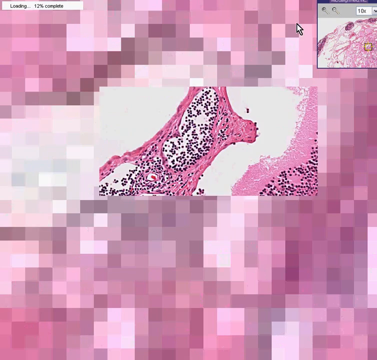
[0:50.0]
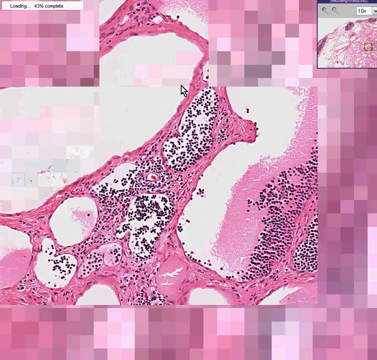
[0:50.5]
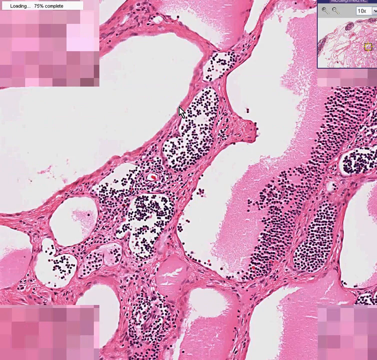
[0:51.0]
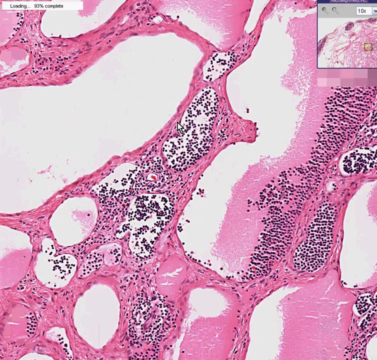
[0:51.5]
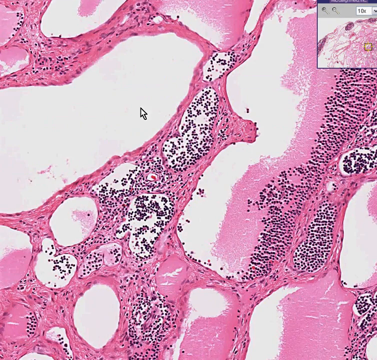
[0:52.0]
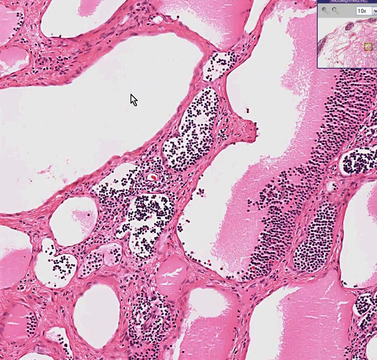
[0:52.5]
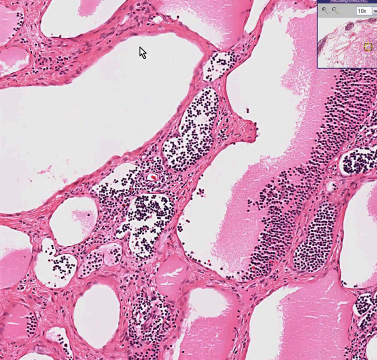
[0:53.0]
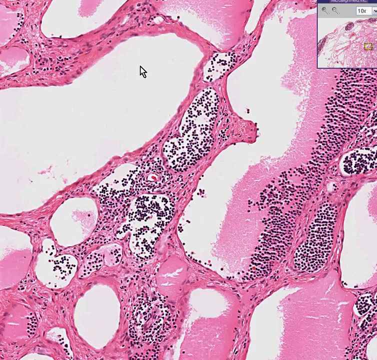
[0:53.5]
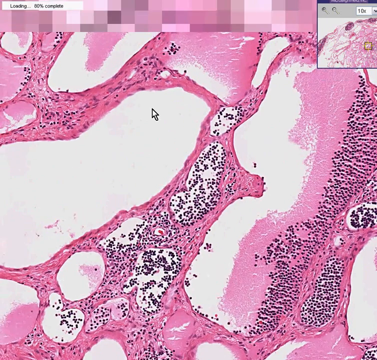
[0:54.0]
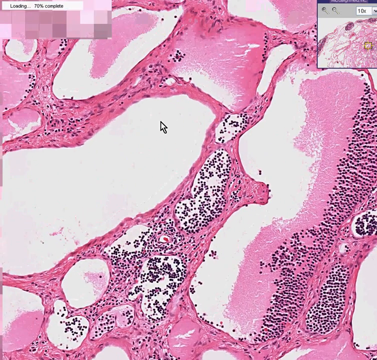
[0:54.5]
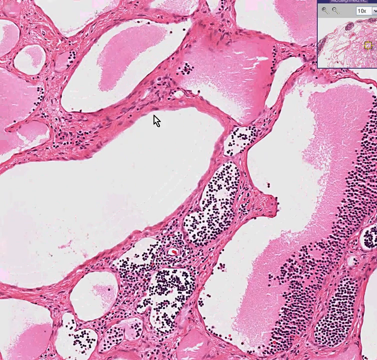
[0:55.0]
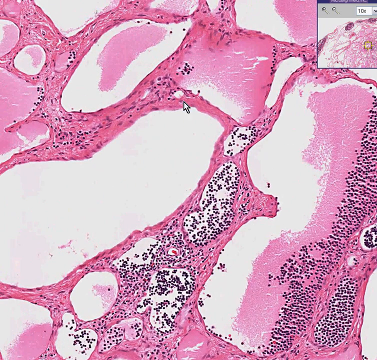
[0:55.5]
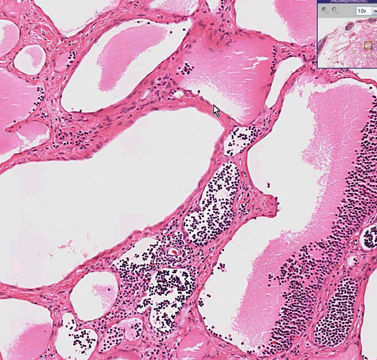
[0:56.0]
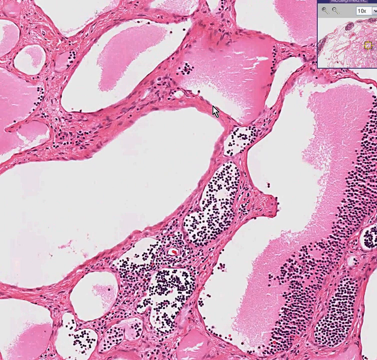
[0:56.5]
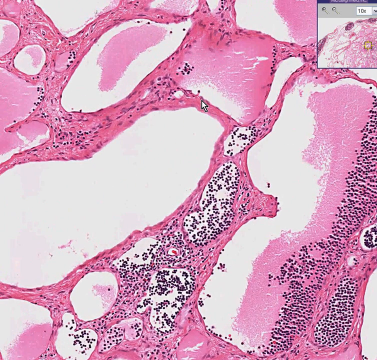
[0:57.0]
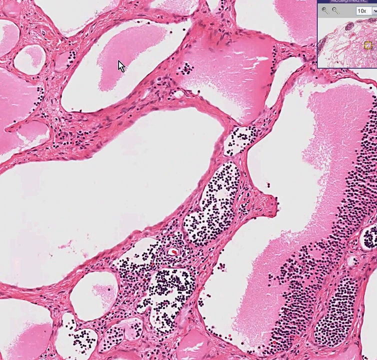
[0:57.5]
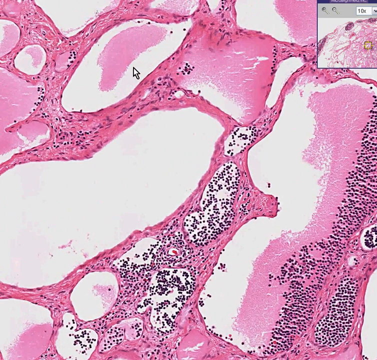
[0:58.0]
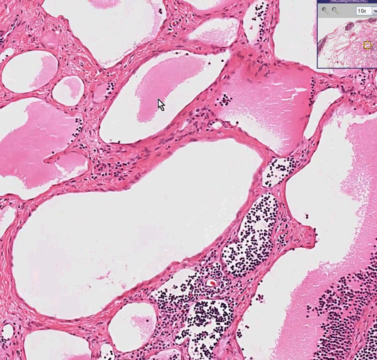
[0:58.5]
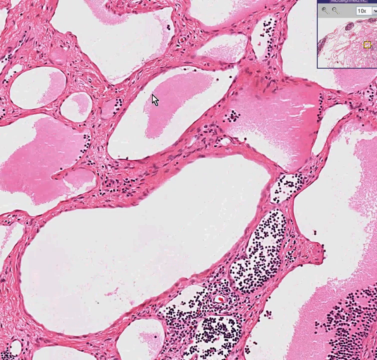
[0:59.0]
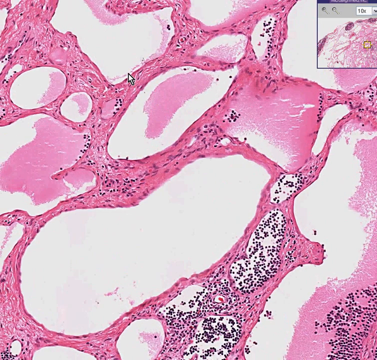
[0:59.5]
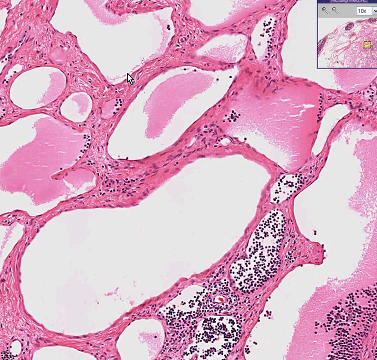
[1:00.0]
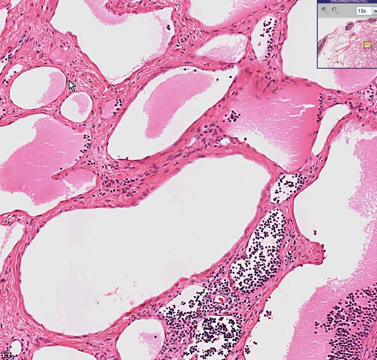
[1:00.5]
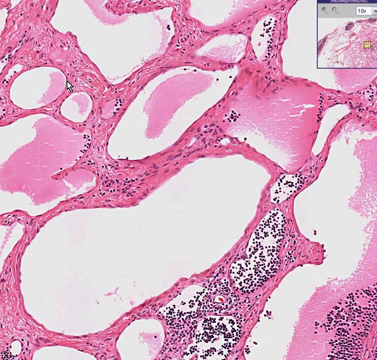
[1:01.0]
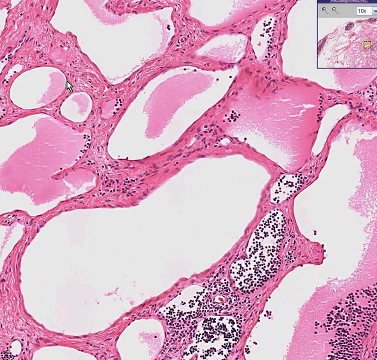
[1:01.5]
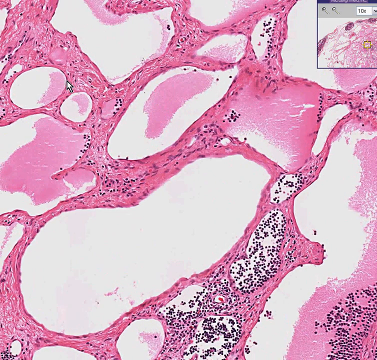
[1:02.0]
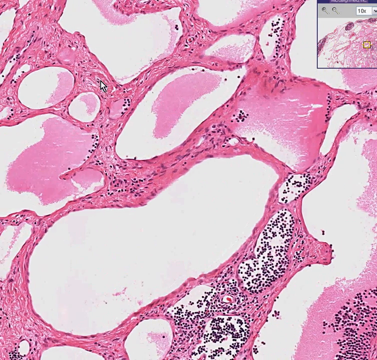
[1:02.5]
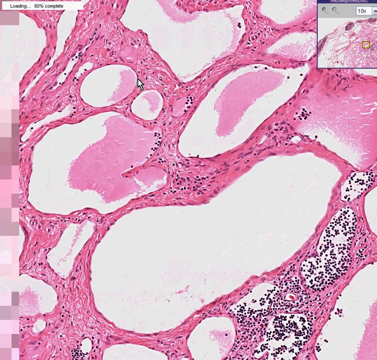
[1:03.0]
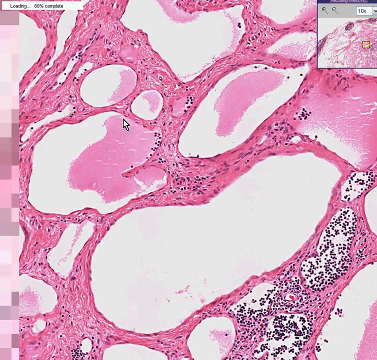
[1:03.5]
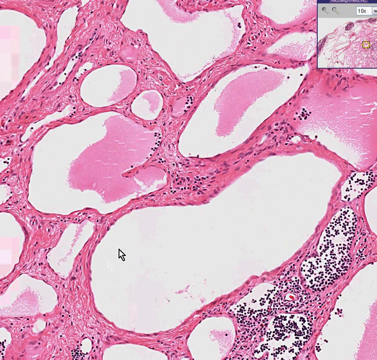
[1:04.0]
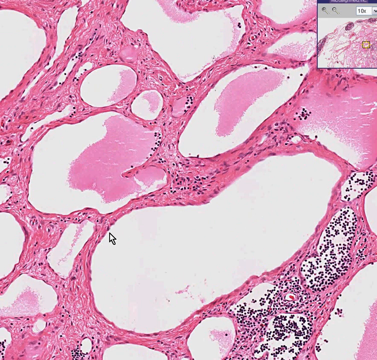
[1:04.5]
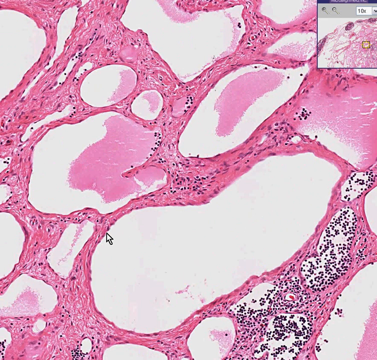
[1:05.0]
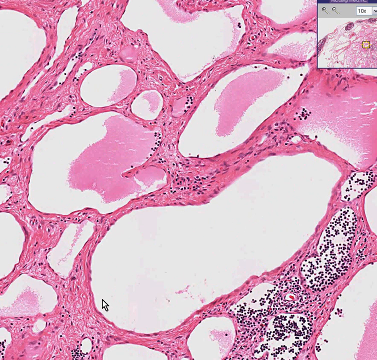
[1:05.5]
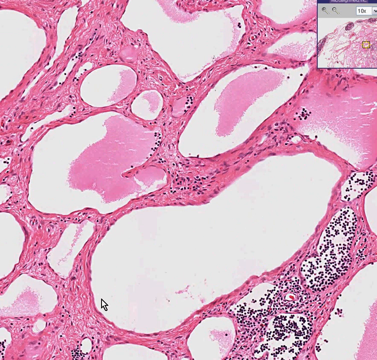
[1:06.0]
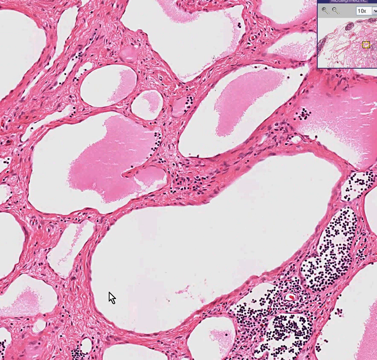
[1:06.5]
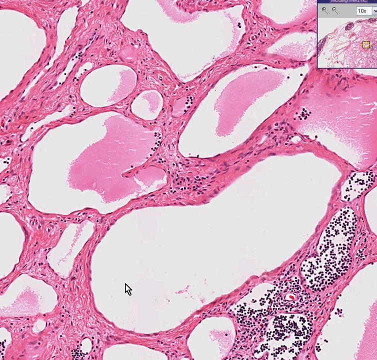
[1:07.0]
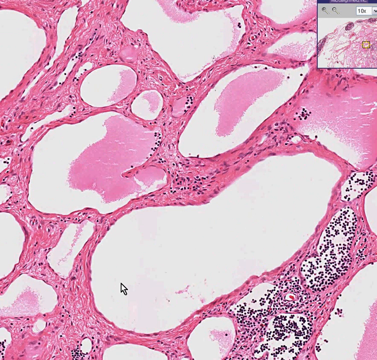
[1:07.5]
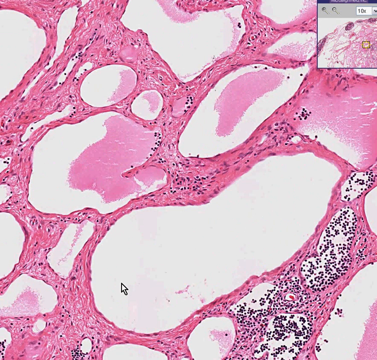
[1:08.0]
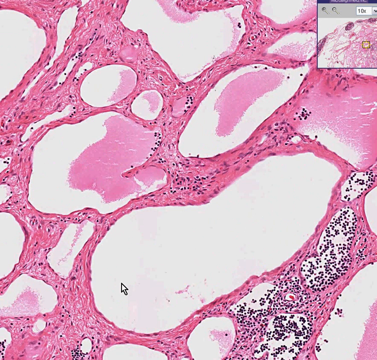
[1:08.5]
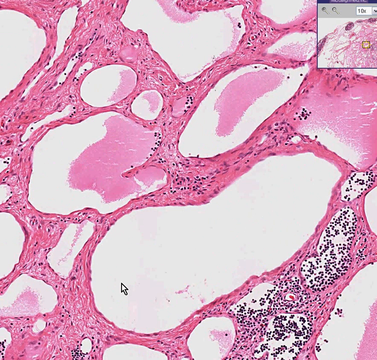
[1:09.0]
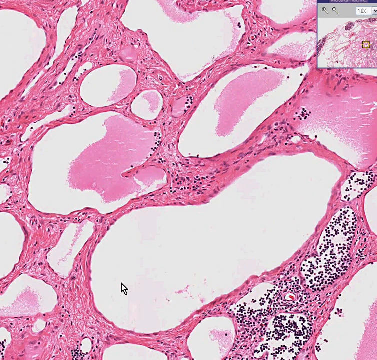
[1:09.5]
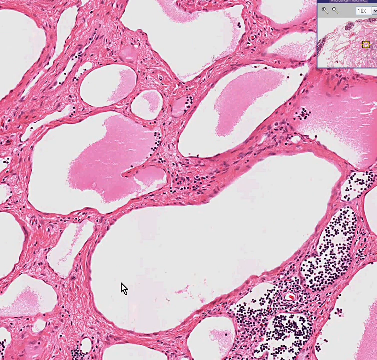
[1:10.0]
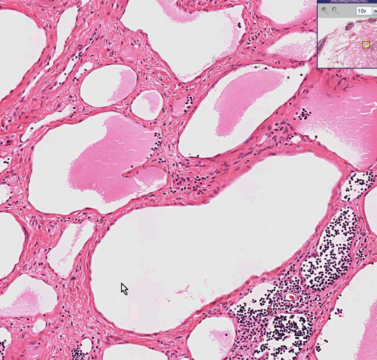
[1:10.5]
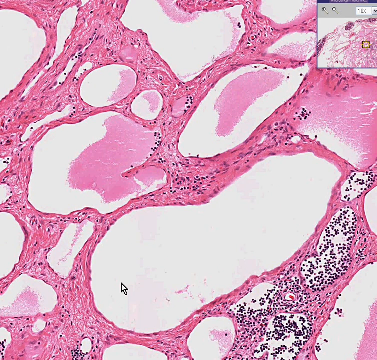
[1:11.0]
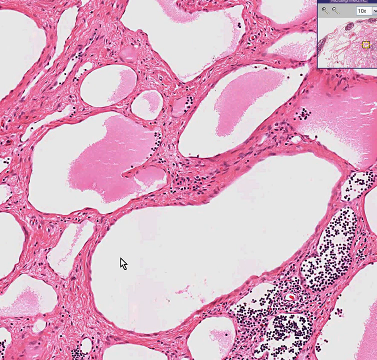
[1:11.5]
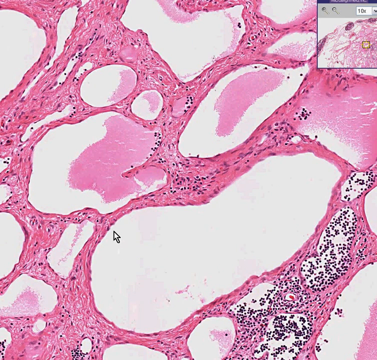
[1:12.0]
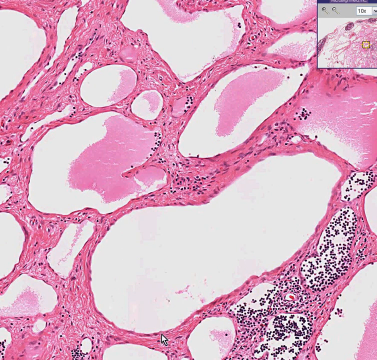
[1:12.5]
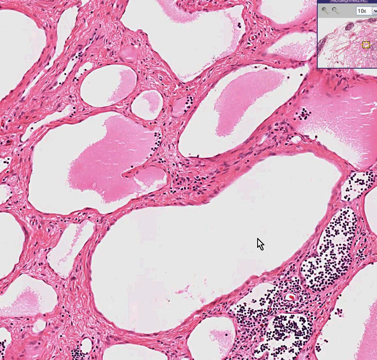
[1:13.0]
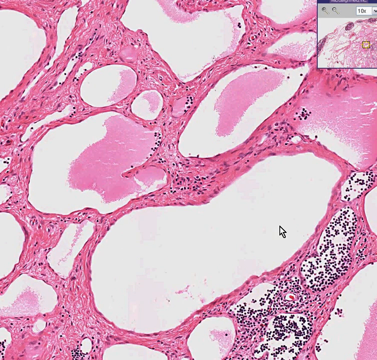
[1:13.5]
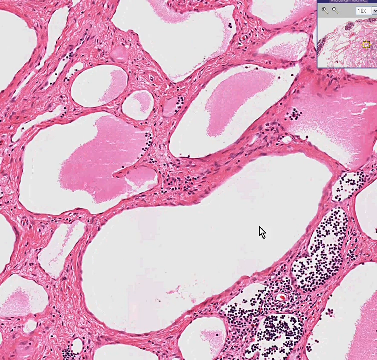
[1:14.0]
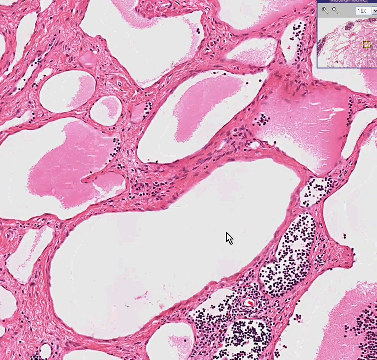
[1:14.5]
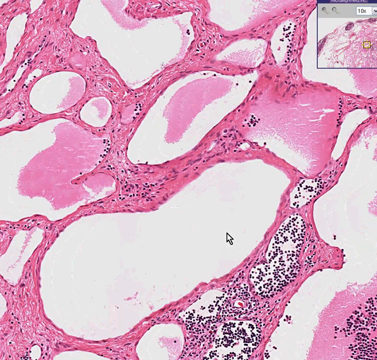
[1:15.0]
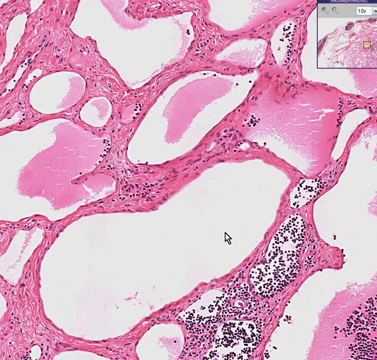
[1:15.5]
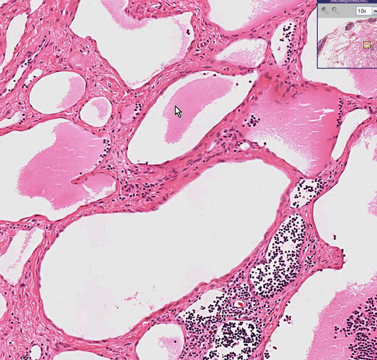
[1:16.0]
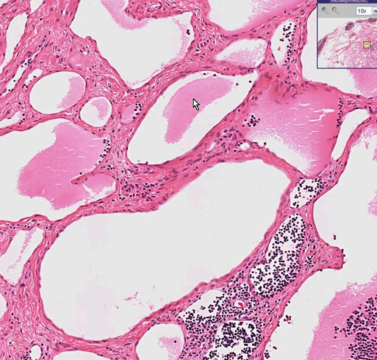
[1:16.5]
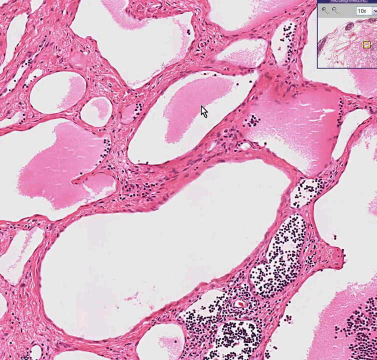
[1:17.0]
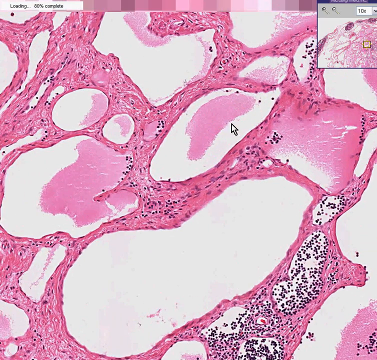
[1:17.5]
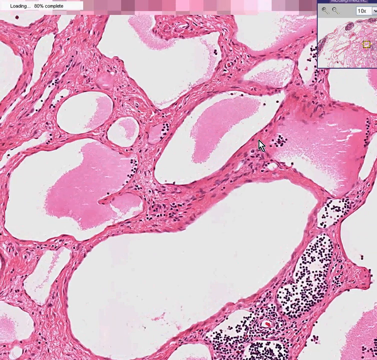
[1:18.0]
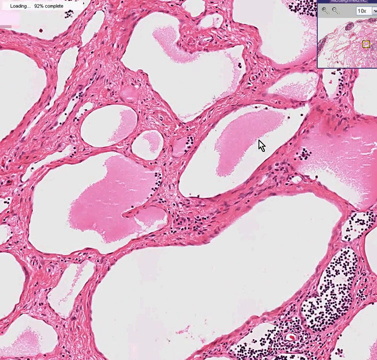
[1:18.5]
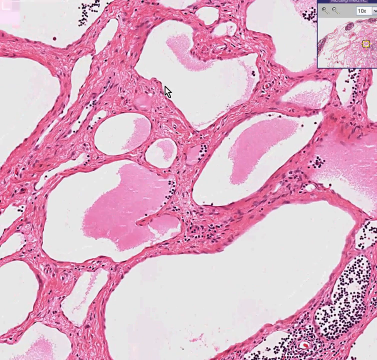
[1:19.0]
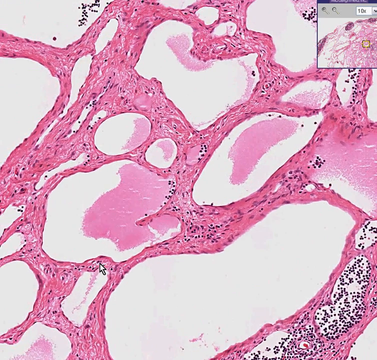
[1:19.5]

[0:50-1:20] The user is in the middle of zooming in. The center of the screen has rendered into a clear image while everything around it is still pixelated. In the center are strands of red with white in the middle and many black dots; it is possibly an MRI showing cancer cells. The image finishes rendering. The user moves the mouse around and shifts the image downward and to the right, then to the right, moves the mouse a little more, and shifts the image to the right and down. There are many black dots in the pink and red.